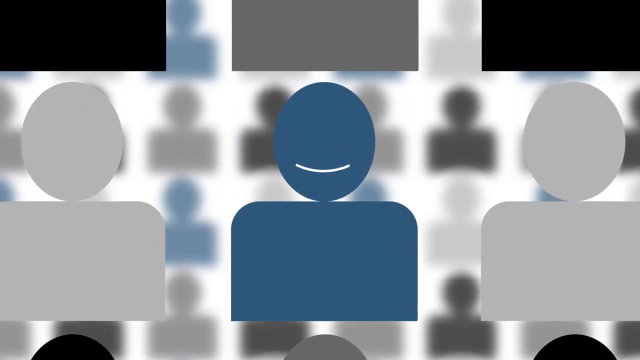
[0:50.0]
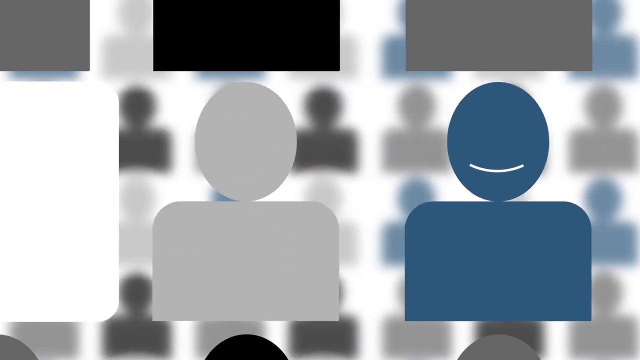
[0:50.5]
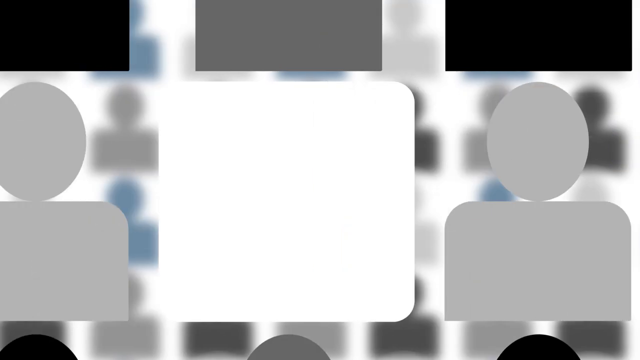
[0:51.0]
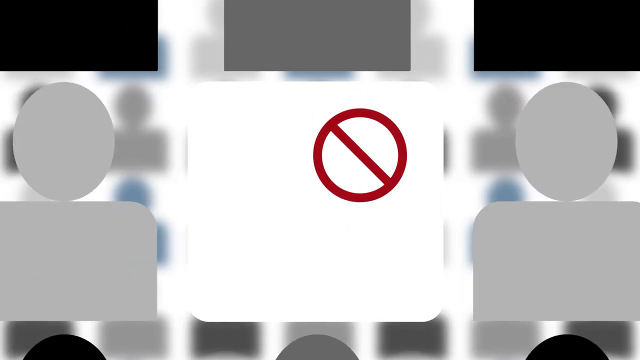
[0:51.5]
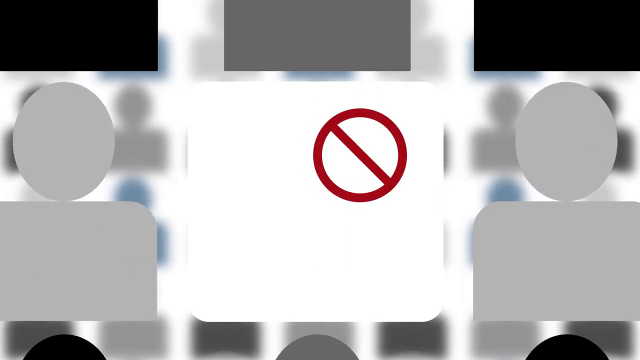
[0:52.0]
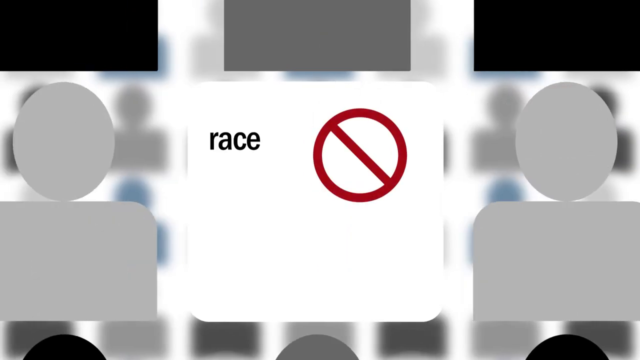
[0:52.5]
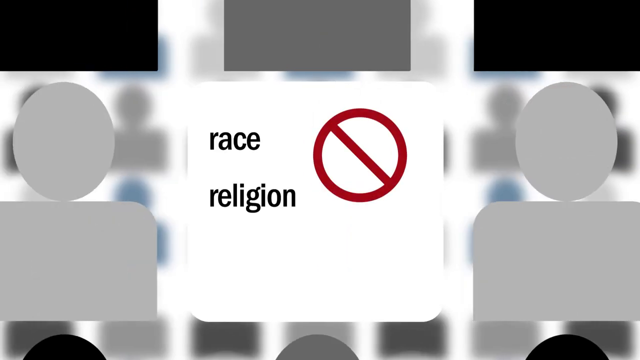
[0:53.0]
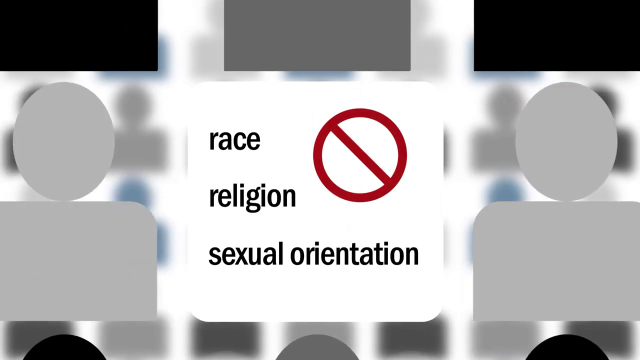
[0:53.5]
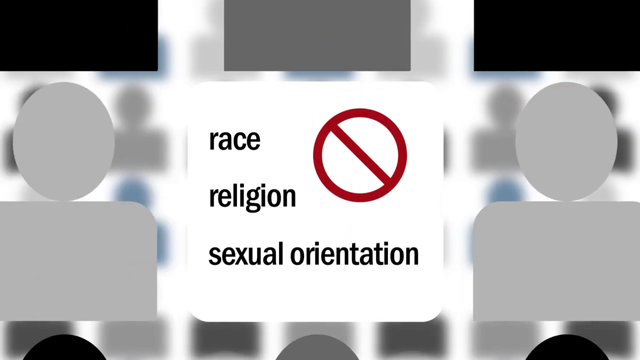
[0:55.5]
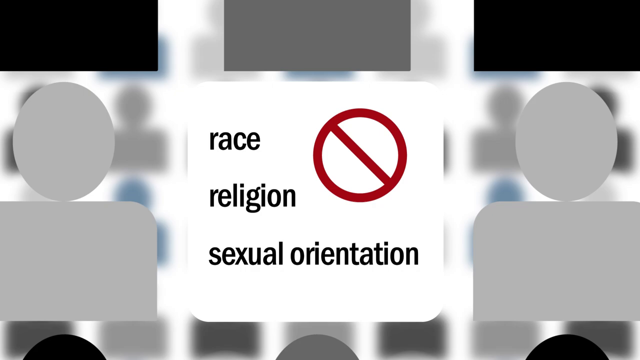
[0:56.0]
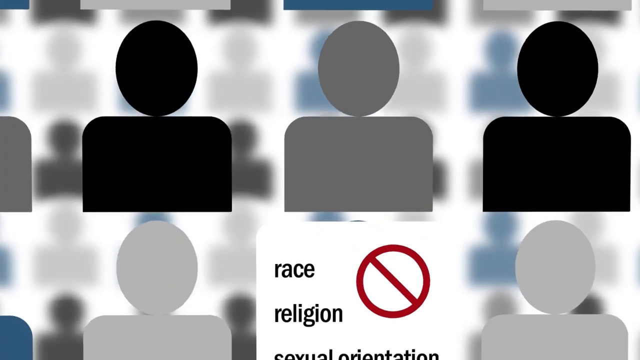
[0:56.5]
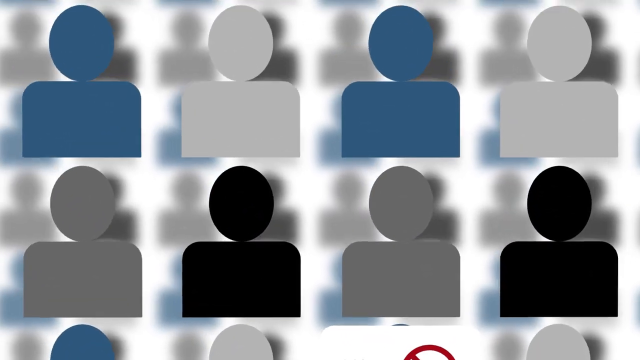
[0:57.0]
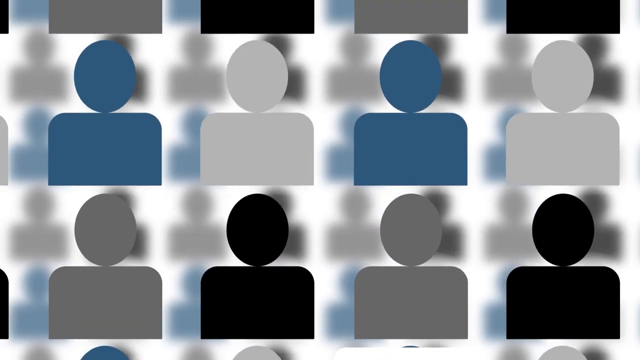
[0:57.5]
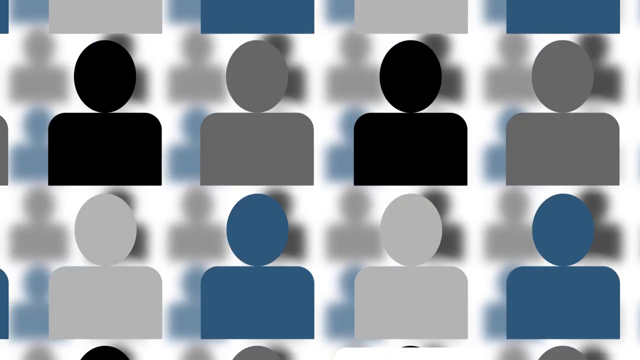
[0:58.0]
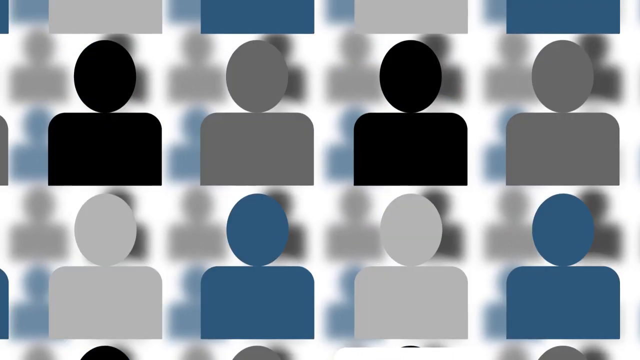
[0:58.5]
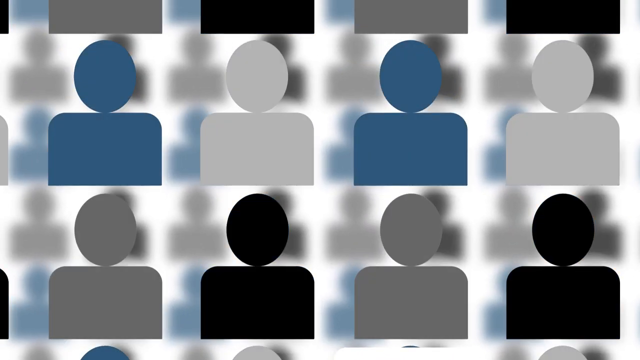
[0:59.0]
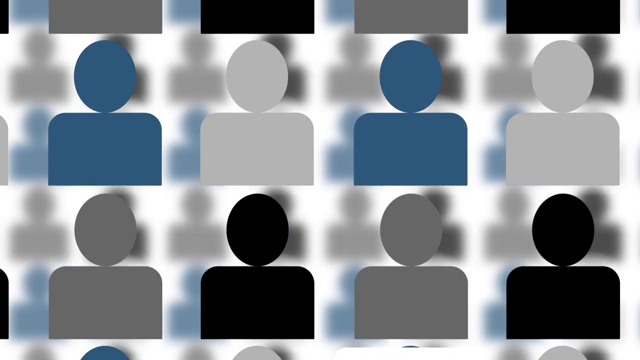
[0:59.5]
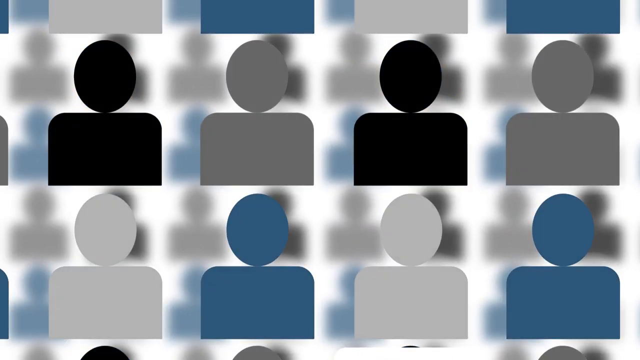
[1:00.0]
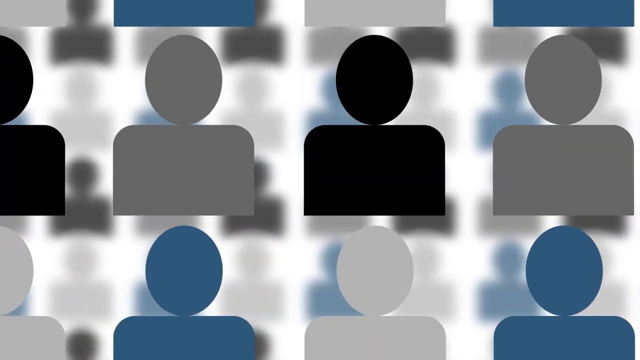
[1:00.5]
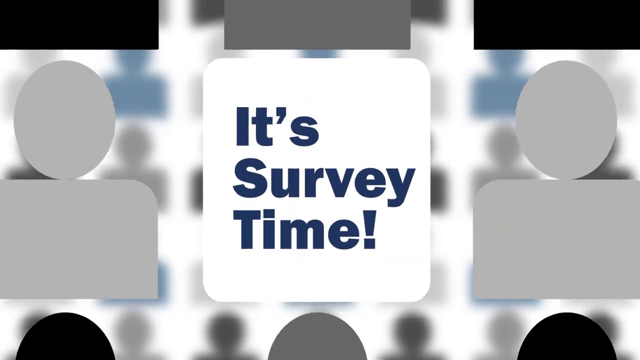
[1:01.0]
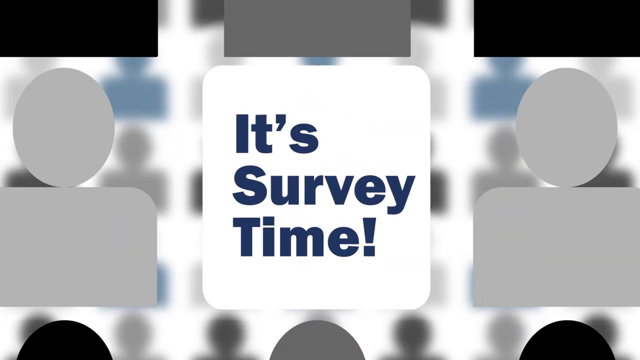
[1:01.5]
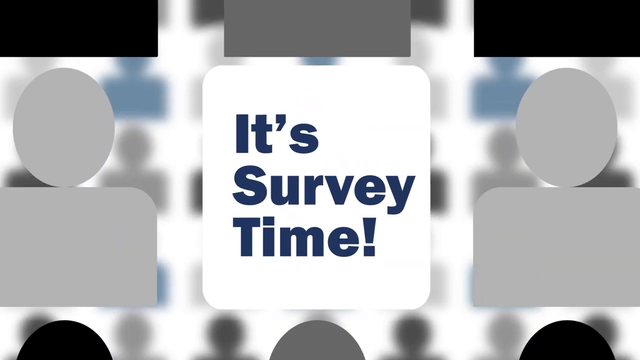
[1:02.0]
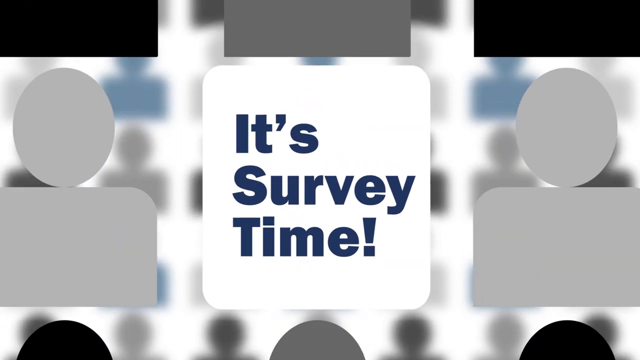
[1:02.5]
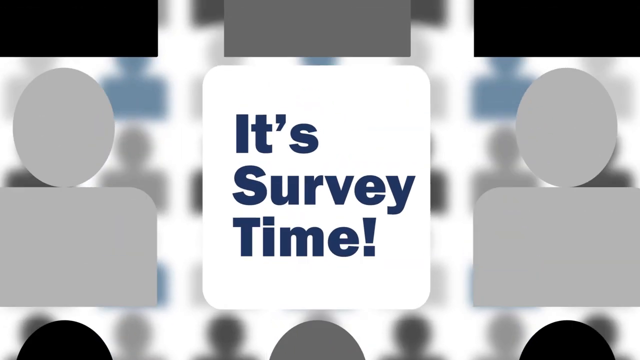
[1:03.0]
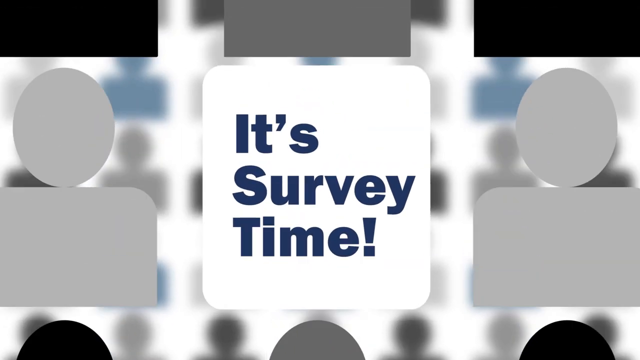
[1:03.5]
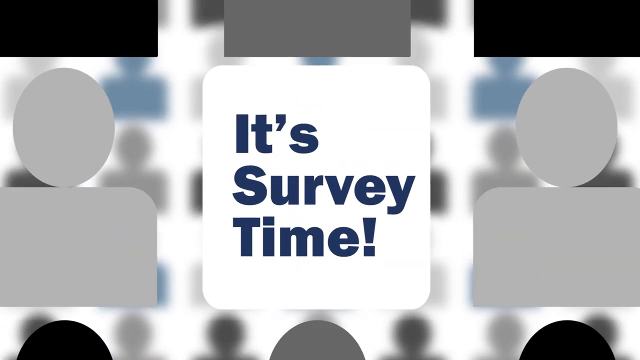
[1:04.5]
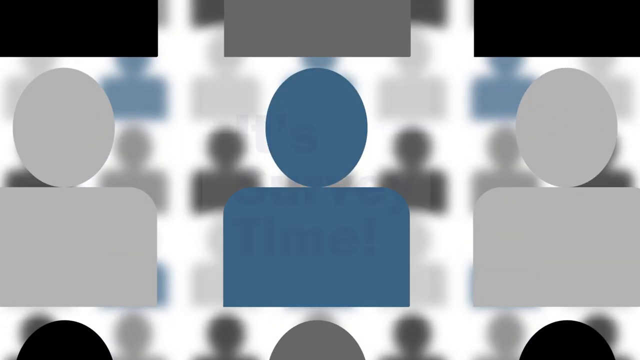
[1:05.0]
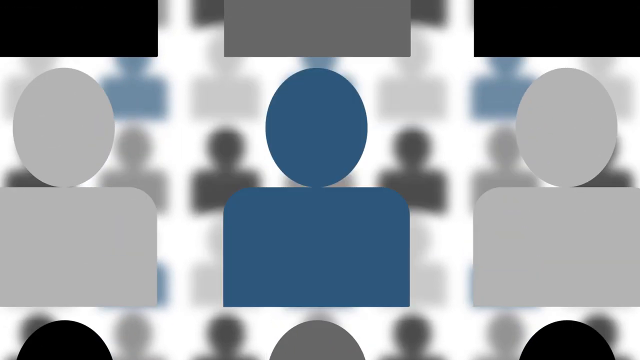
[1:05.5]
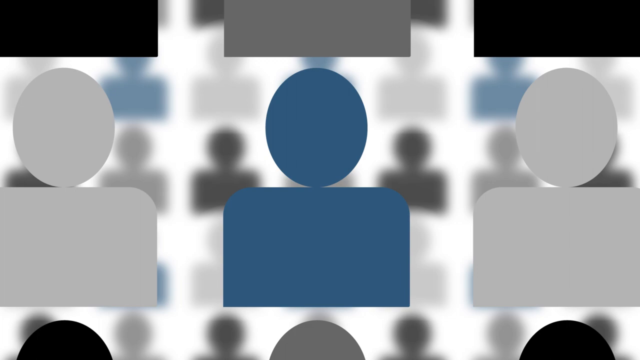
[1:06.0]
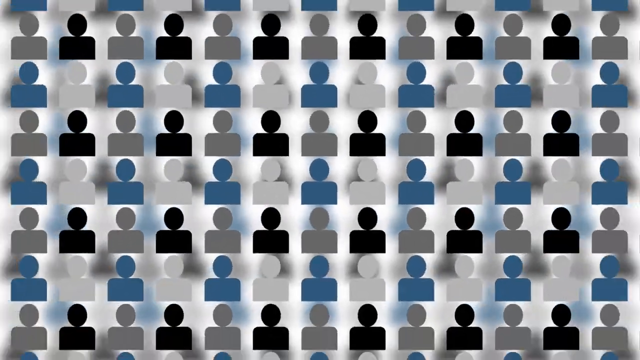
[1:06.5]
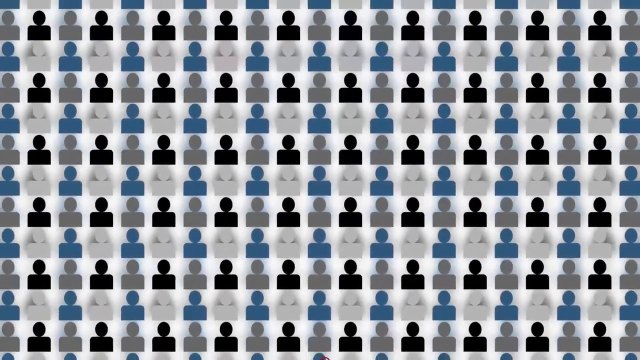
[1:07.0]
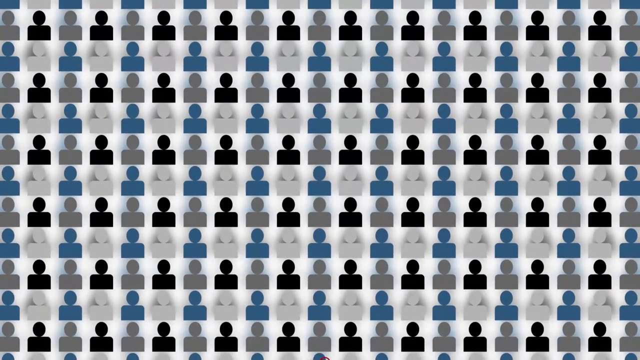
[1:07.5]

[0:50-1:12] The view zeroes in on one of the head-and-shoulder shots, which is replaced with a sign that says "no race, religion, or sexual orientation," then "diversity." A sign then pops up in place of one of the head-and-shoulder shots, right in the middle, saying "it's survey time." The camera then zooms back out to a huge field of probably hundreds of gray figures, one of them light gray. Finally, the screen goes black.